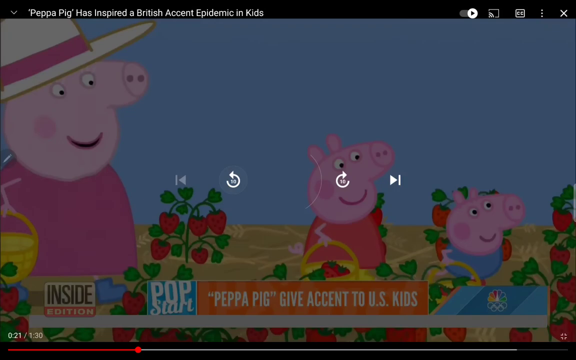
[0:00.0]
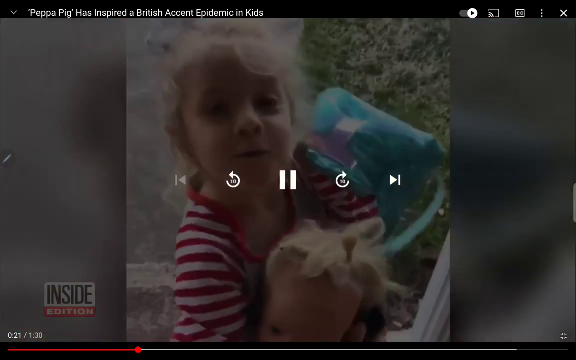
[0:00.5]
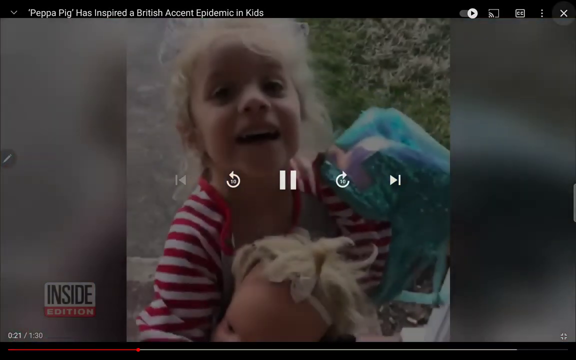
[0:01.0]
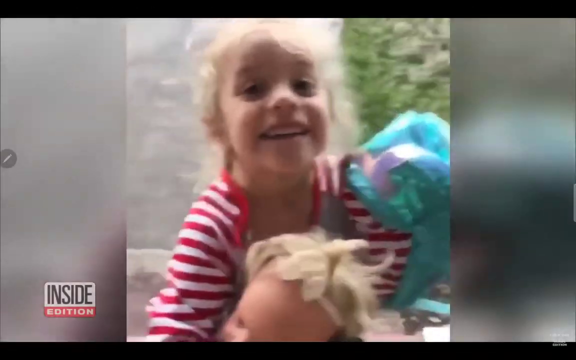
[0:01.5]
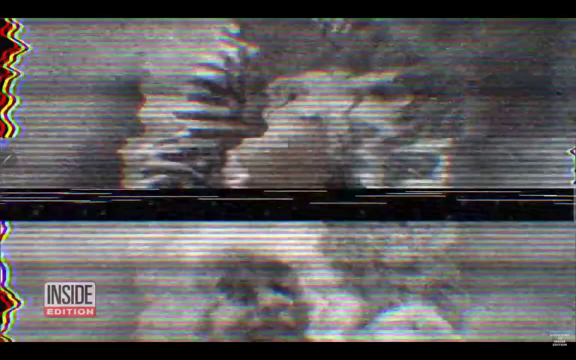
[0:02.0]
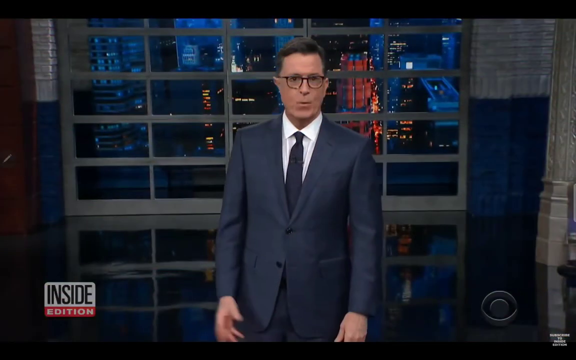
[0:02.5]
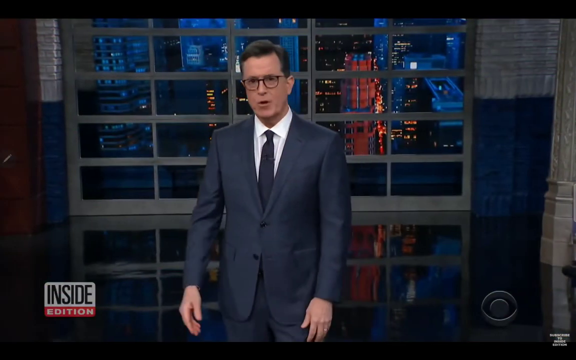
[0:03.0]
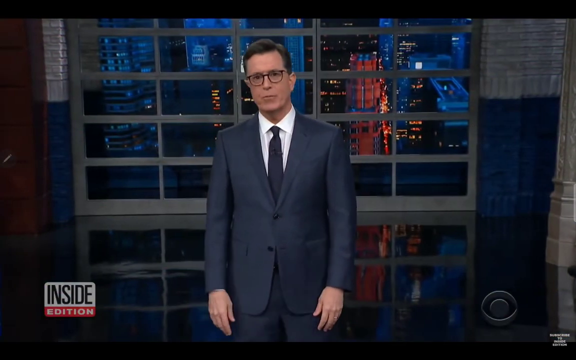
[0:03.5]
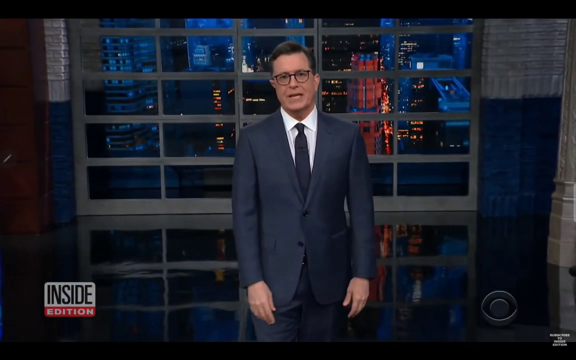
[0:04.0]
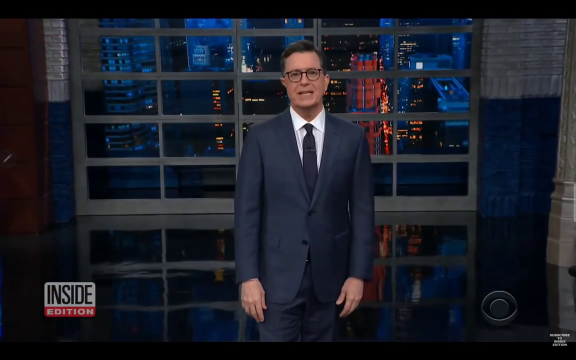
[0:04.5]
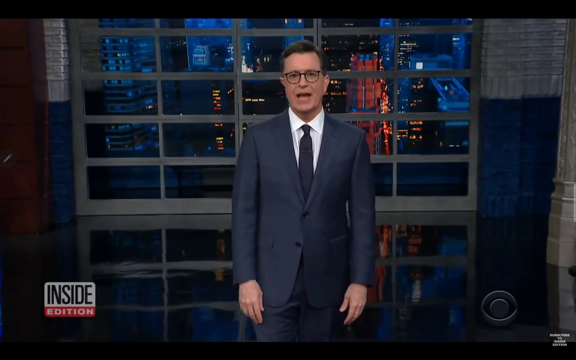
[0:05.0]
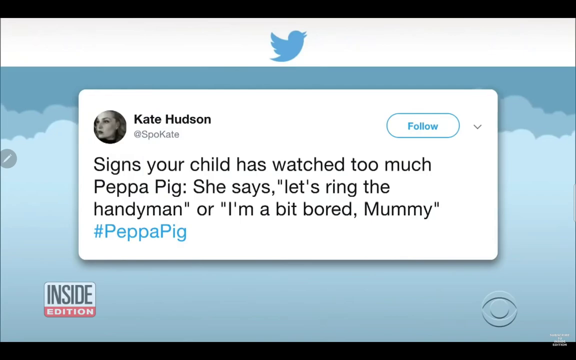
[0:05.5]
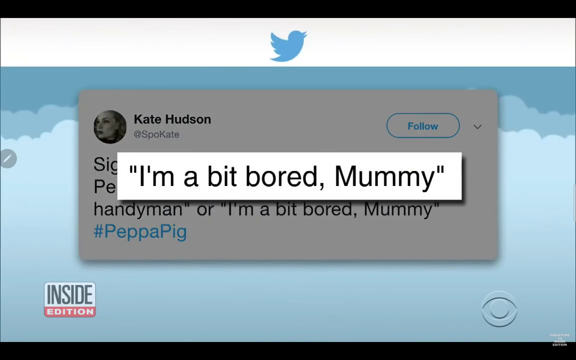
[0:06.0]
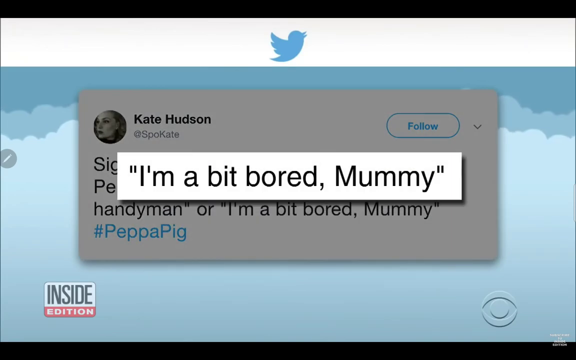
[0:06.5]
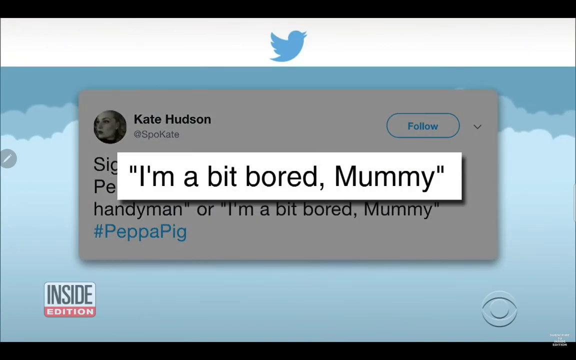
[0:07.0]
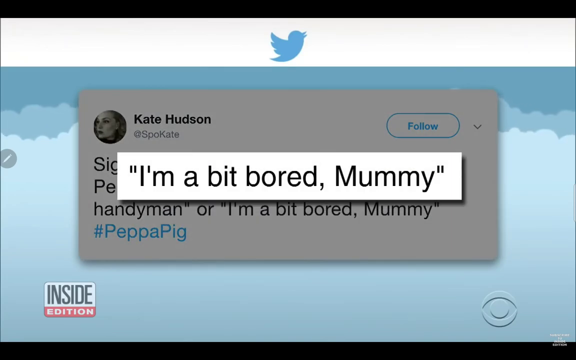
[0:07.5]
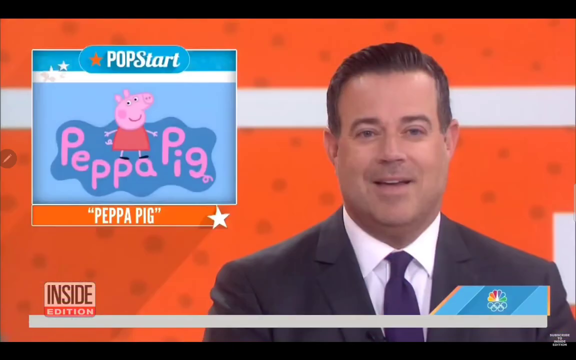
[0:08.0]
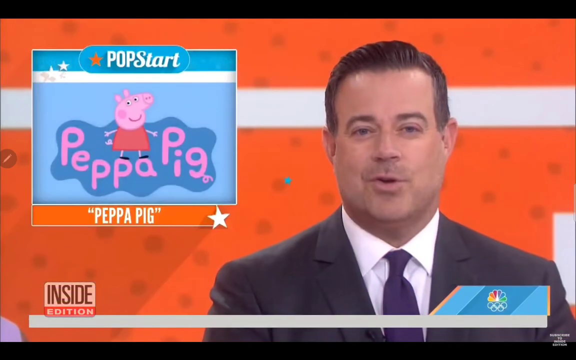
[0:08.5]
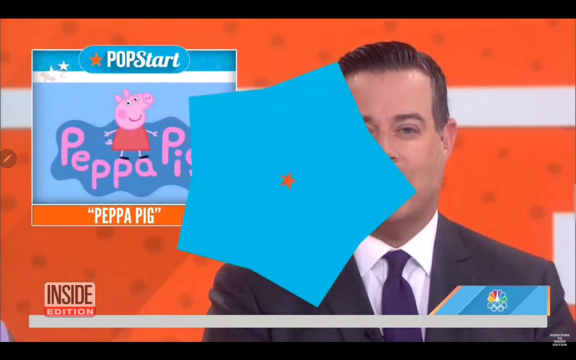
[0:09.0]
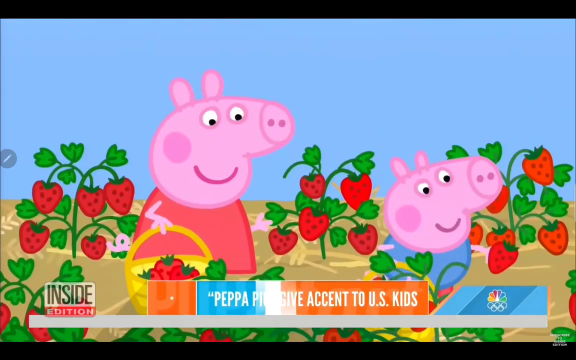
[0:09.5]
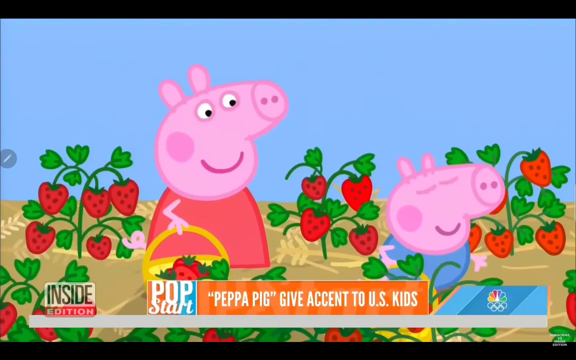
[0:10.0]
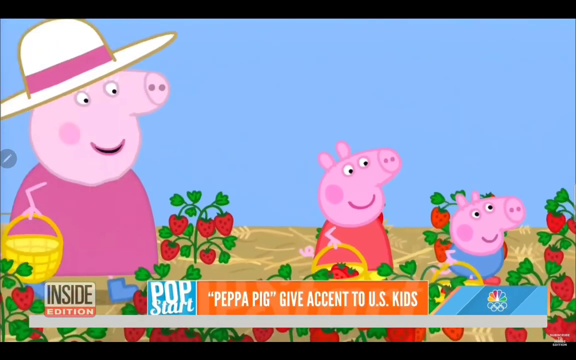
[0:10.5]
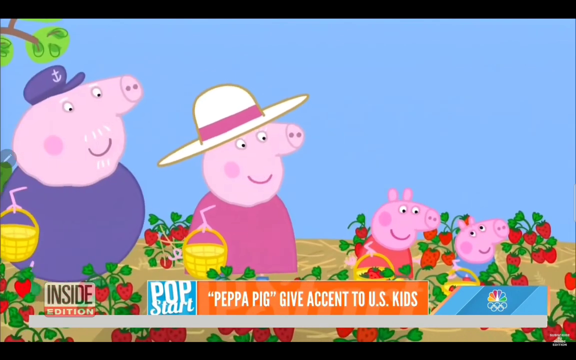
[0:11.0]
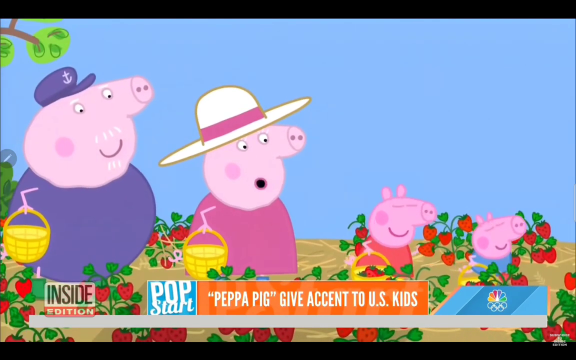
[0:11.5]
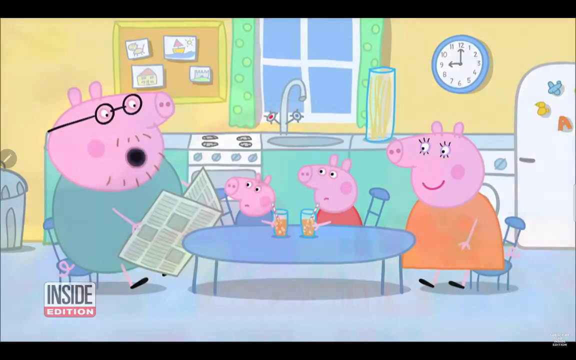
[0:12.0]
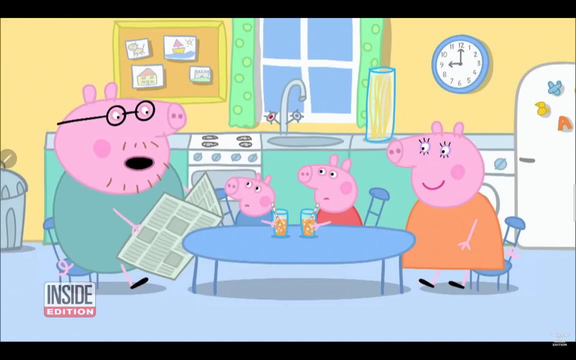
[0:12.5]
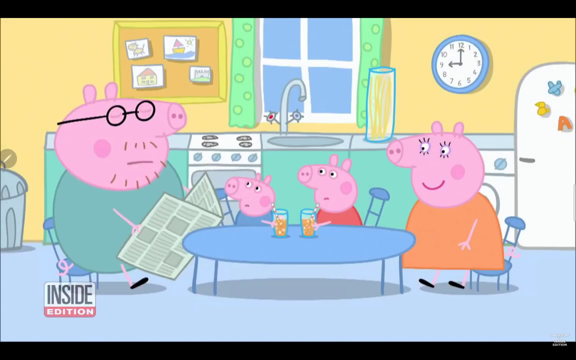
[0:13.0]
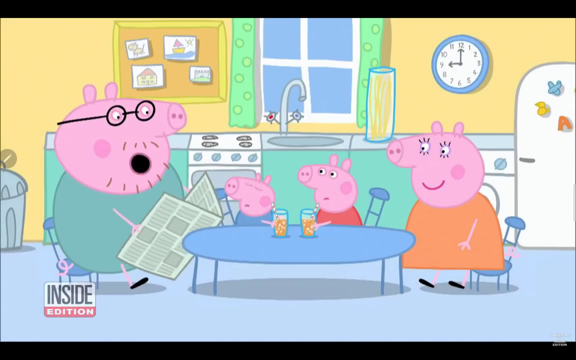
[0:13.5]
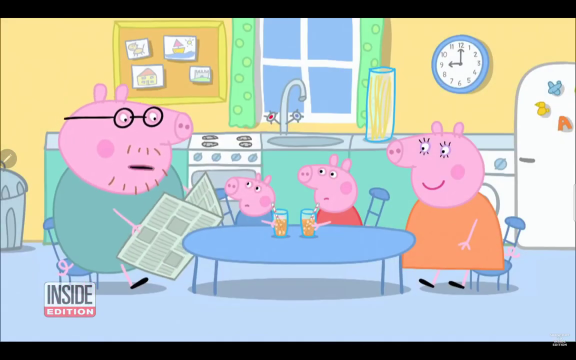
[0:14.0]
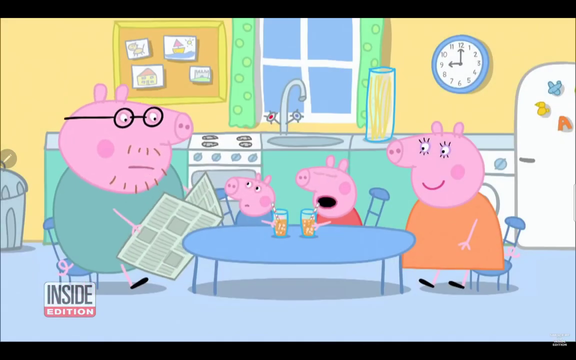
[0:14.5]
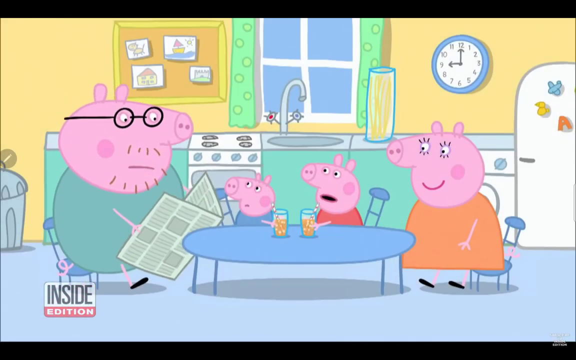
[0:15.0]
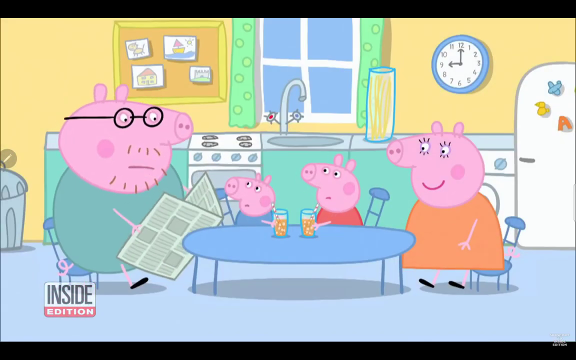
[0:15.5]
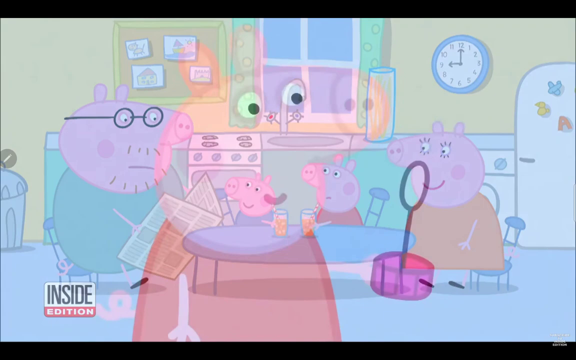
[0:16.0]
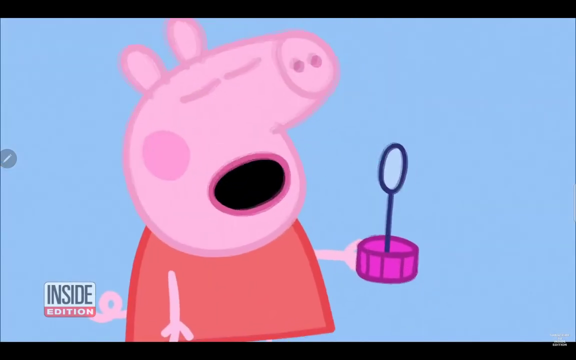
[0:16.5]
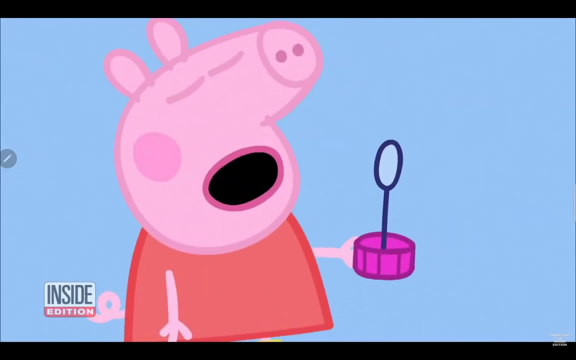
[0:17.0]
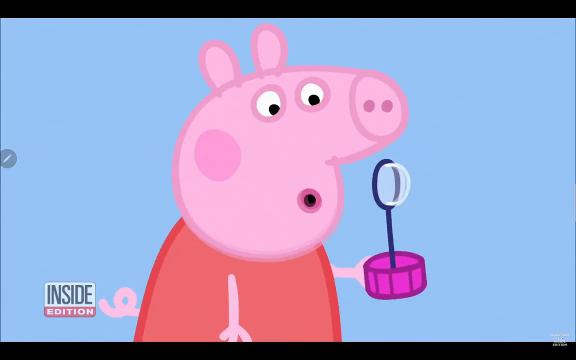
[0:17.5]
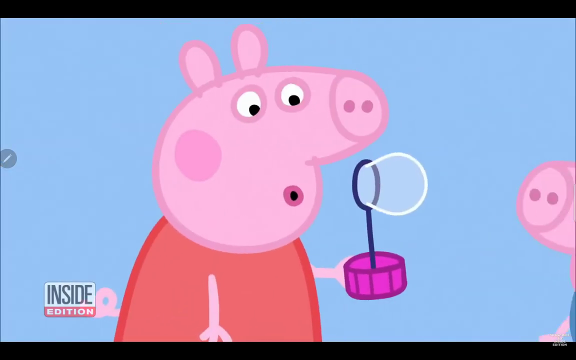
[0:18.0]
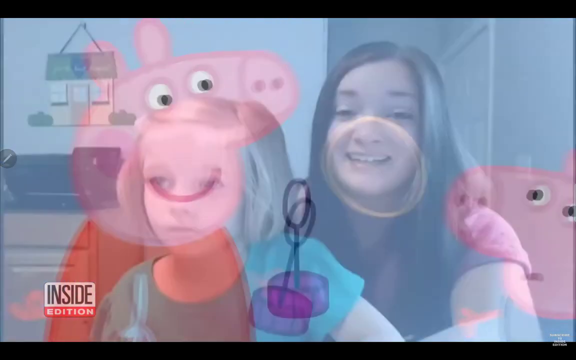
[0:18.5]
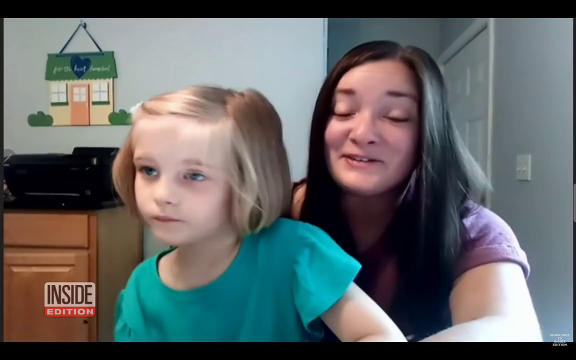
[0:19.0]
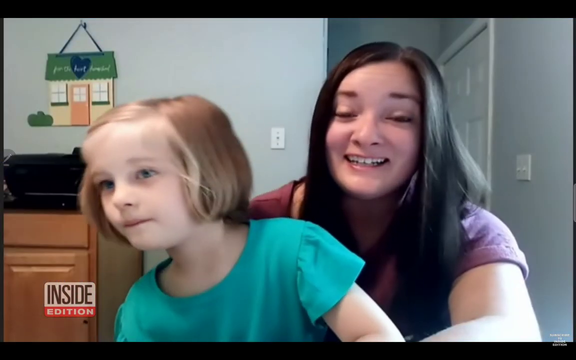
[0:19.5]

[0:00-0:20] The video opens with a series of short clips. A little girl in a red and white striped shirt appears to be holding a bag in her left hand, with the Inside Edition logo on the bottom of the screen. The video then moves to the CBS show The Late Show with Stephen Colbert, where Stephen Colbert, in a gray suit, blue tie and white shirt, is talking. Next comes a tweet from Kate Hudson about her daughter calling her mummy. A clip of Carson Daly follows, and then the video focuses on Peppa Pig, showing clips from the Peppa Pig show.